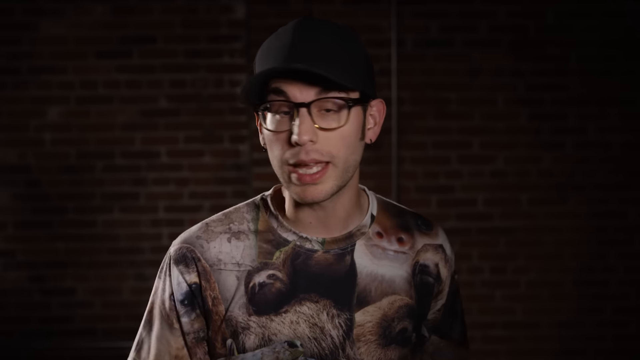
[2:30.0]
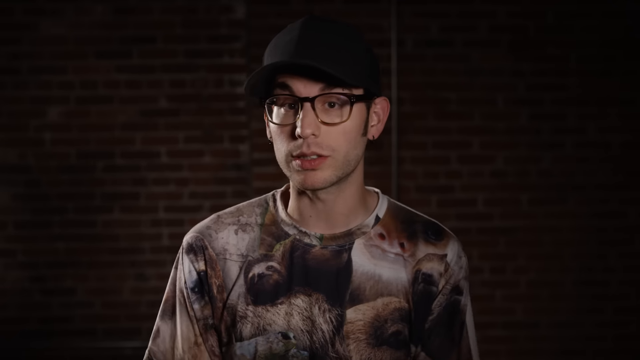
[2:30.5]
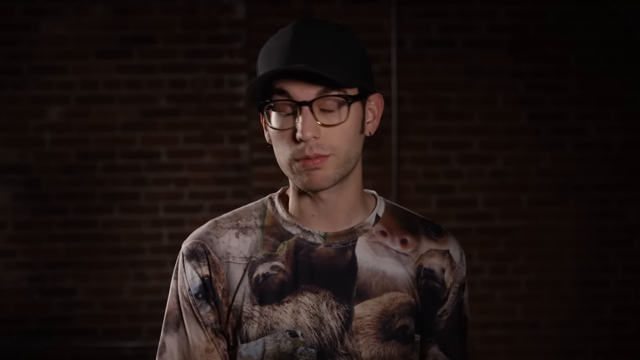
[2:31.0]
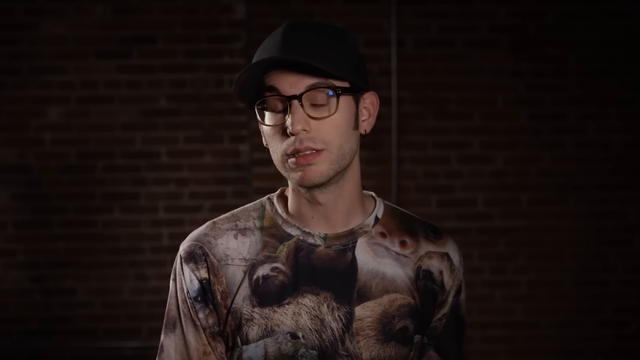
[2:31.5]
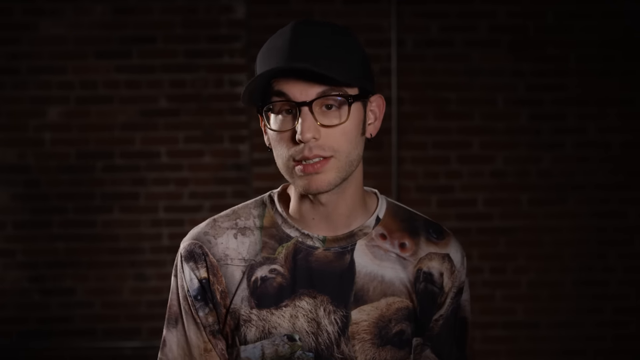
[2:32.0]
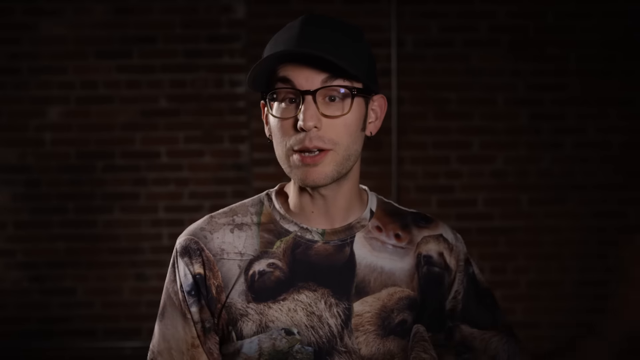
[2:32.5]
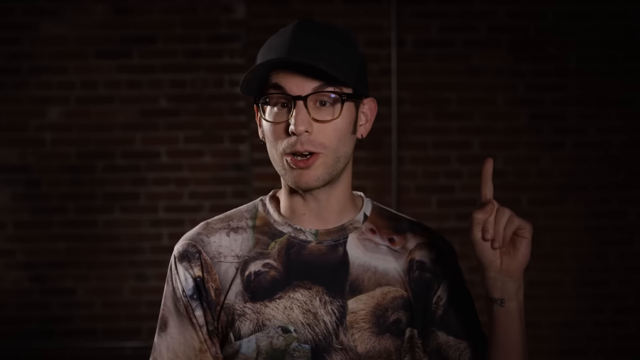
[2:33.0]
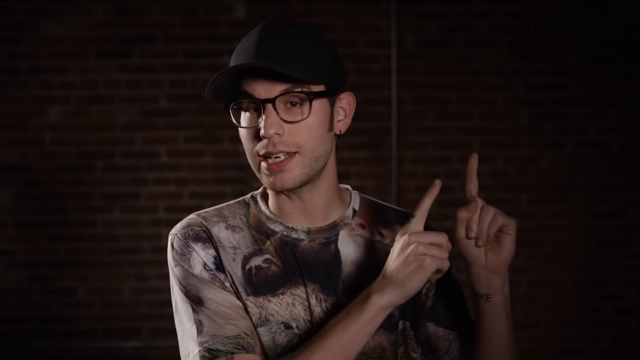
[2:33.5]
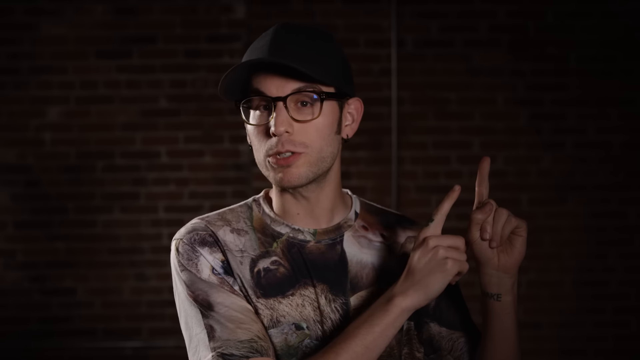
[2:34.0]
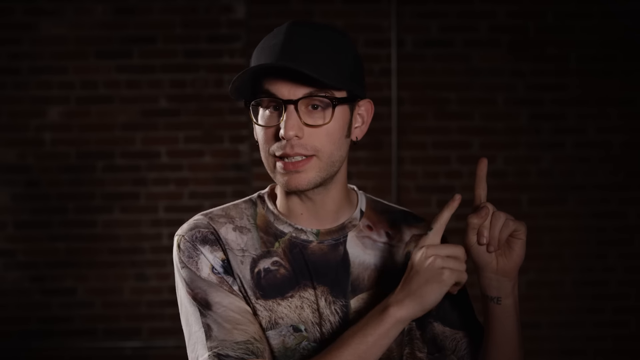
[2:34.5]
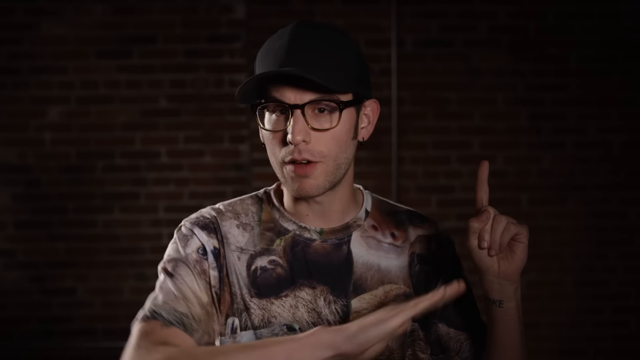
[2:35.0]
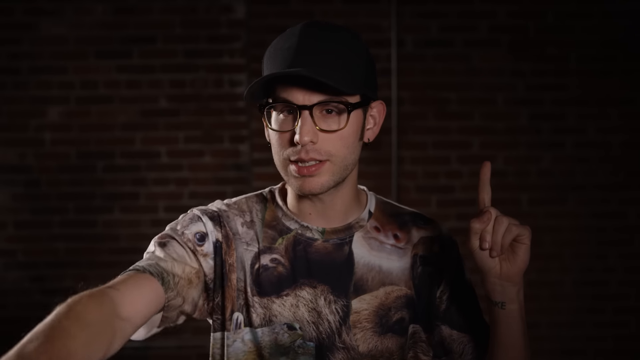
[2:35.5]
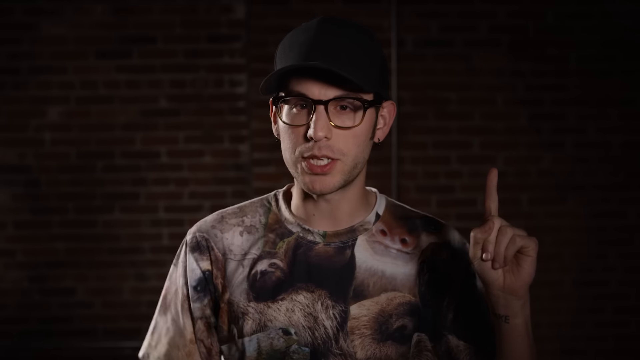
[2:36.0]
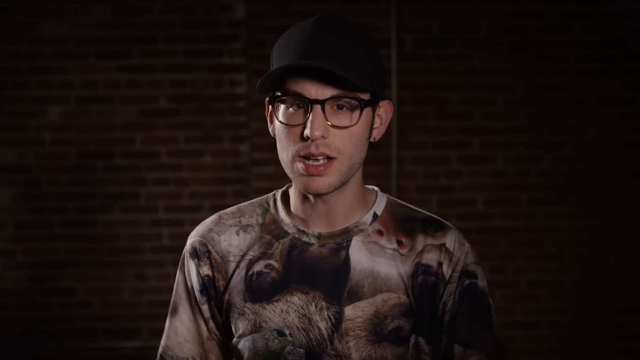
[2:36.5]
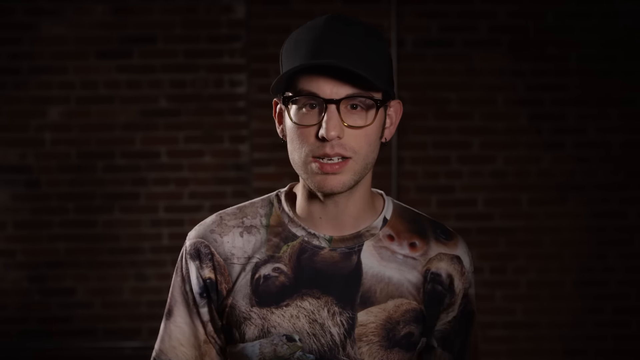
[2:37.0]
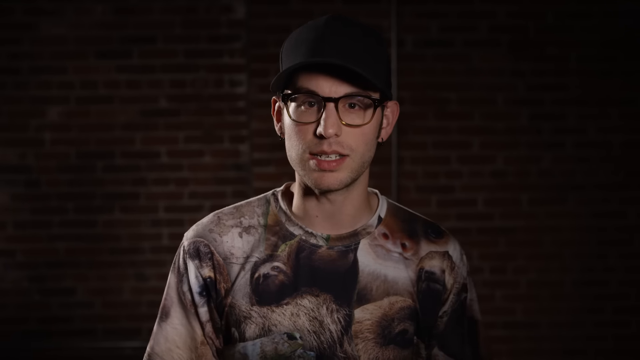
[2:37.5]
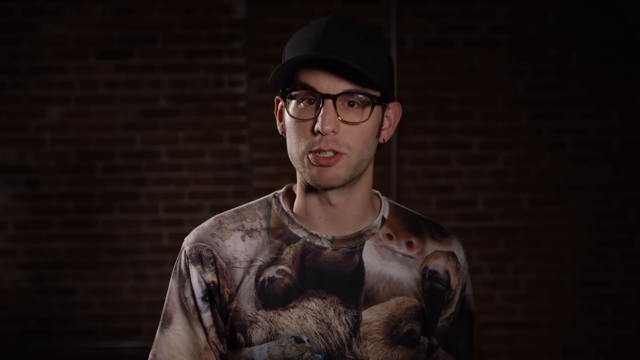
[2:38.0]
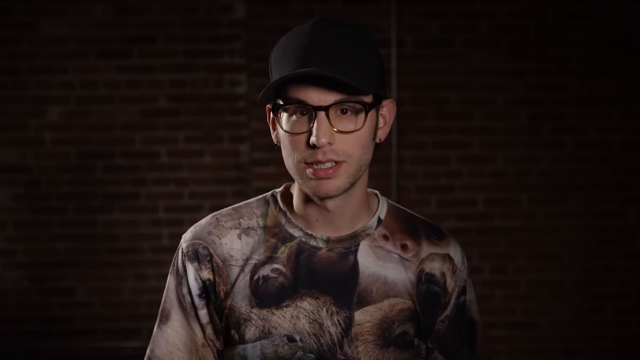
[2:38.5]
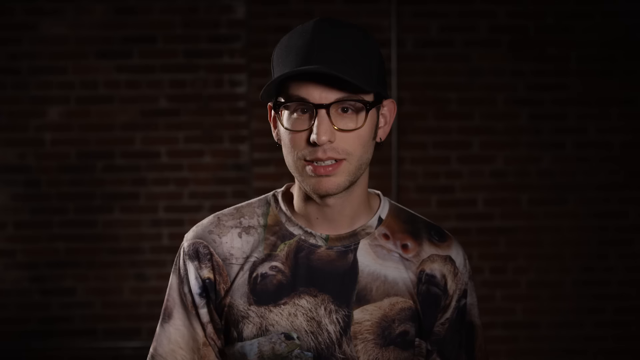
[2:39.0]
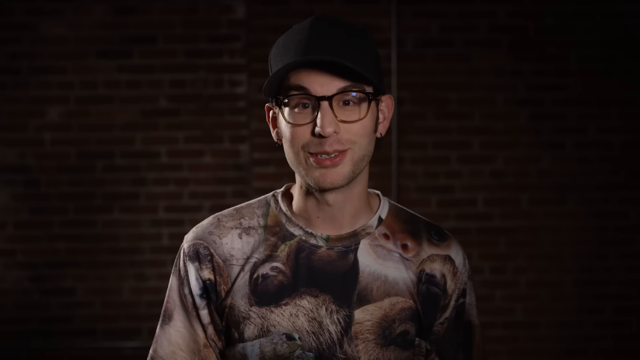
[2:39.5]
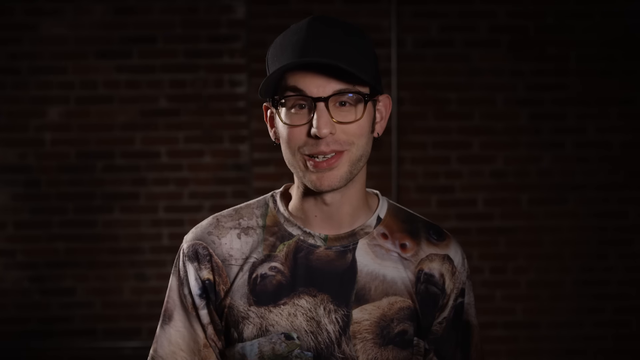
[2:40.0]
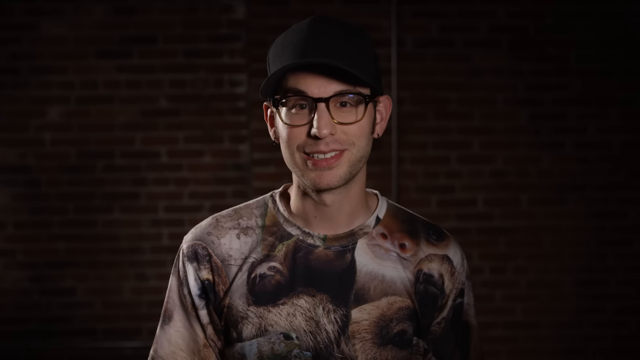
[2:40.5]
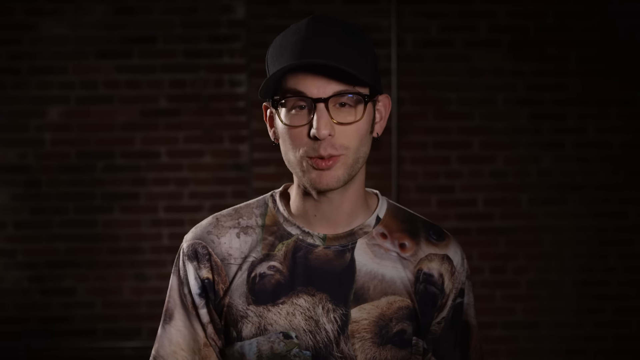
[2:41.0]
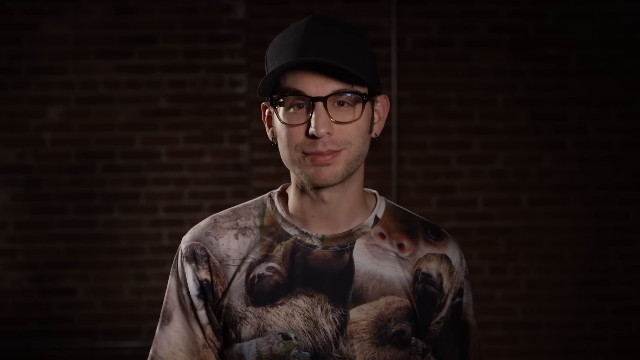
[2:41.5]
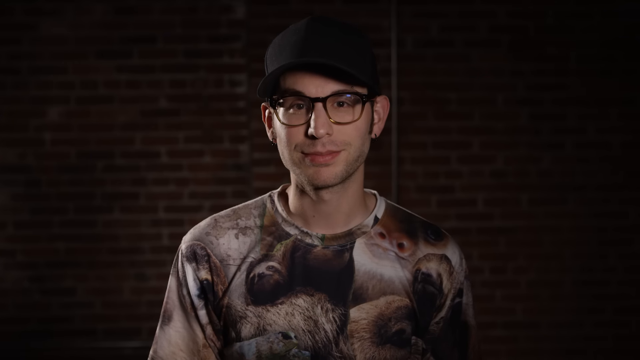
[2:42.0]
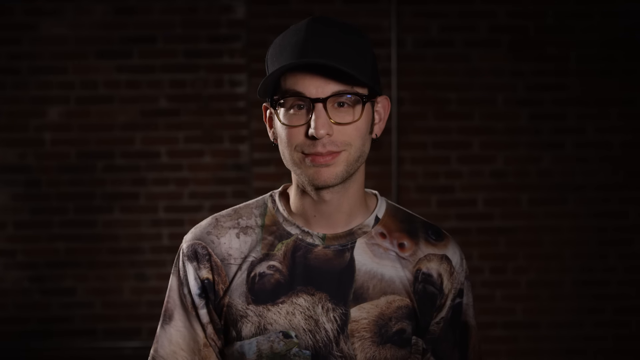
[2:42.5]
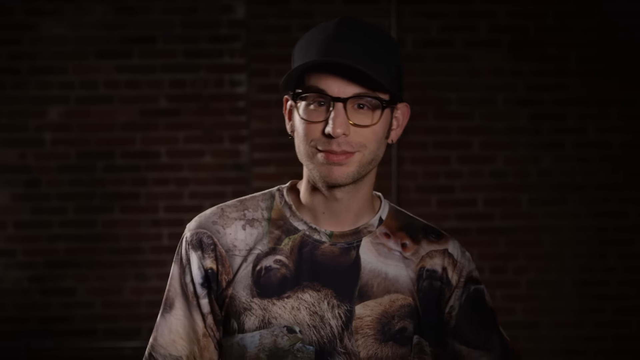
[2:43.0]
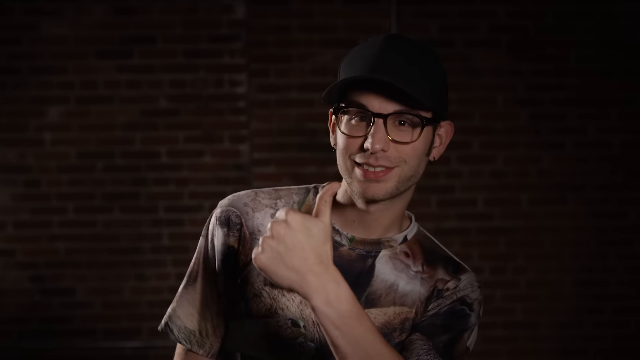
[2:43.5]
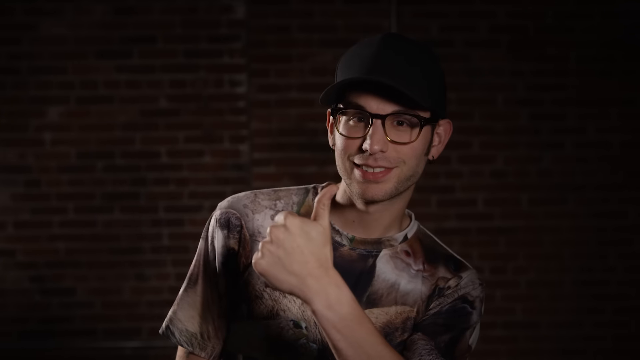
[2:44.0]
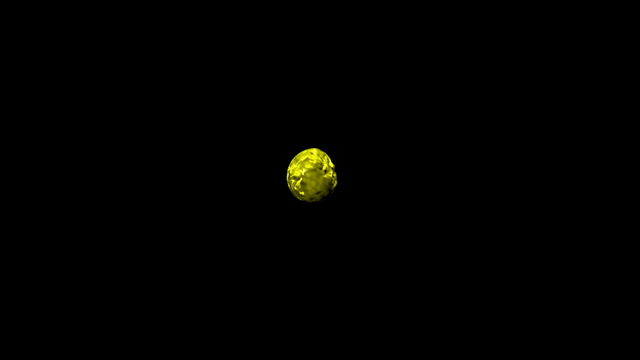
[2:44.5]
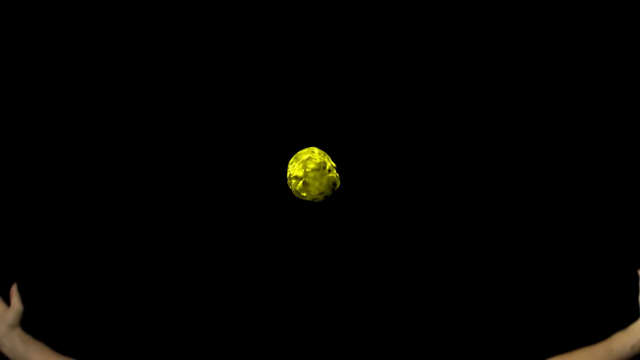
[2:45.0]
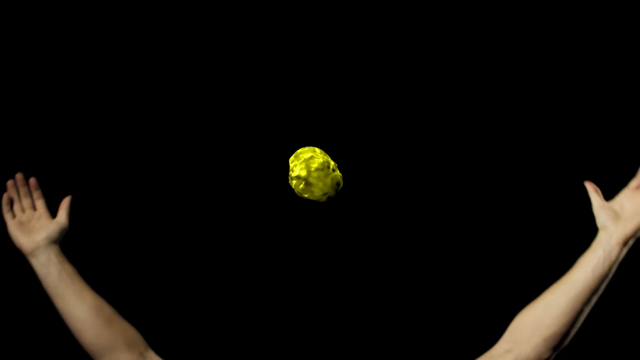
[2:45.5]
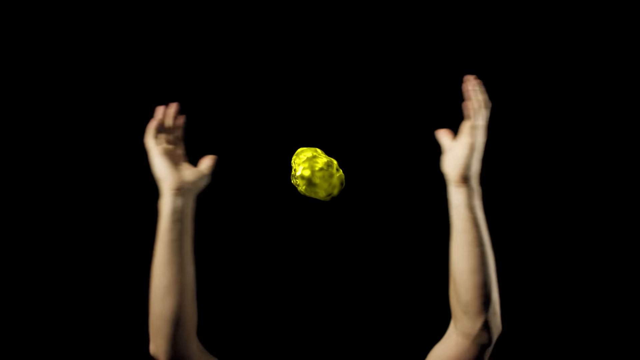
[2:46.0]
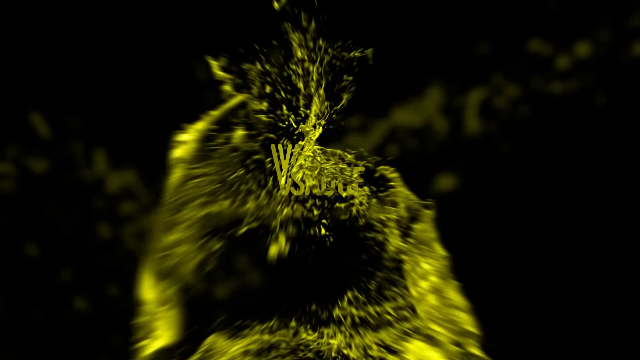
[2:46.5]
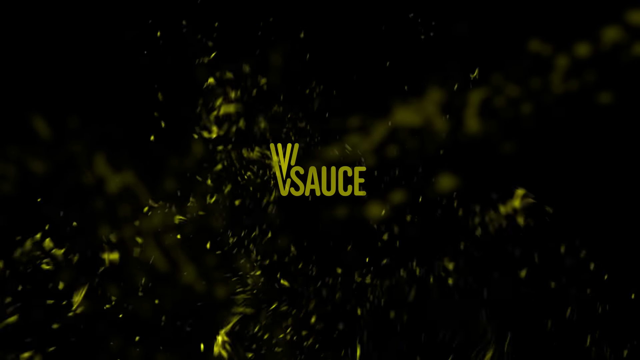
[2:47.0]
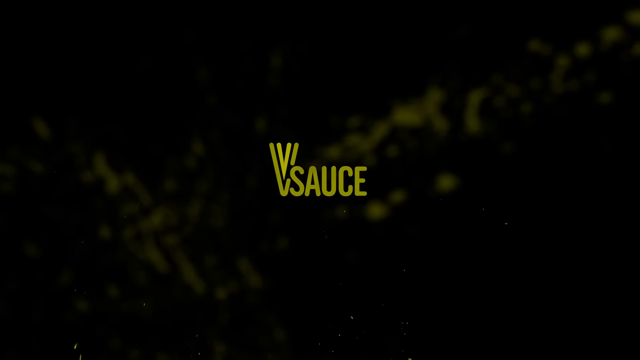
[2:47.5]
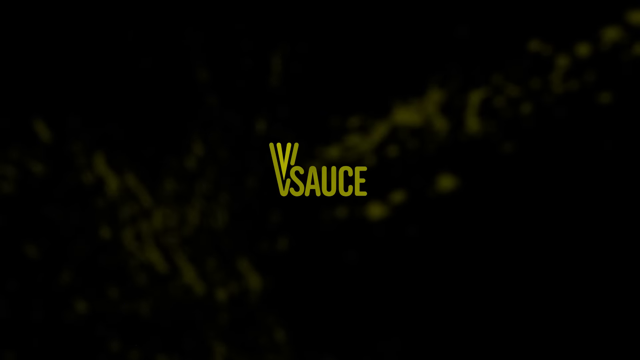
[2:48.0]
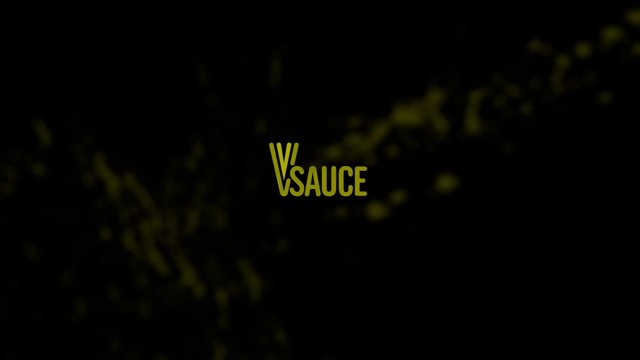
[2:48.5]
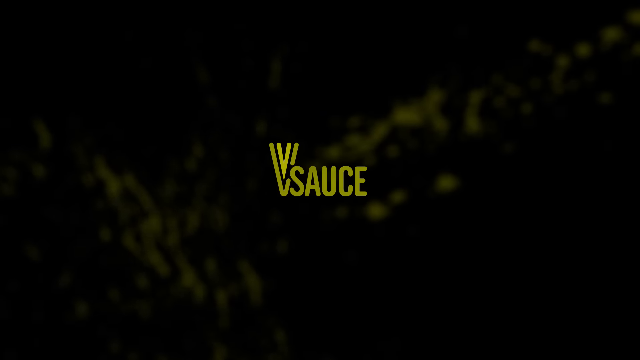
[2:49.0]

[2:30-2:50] A guy in black glasses and a black cap talks, wearing a shirt apparently covered in different sloths. He points up at the sky, then gives a thumbs up with his left hand and smiles, seeming happy. A colored brain appears with two hands, followed by a displayed Vsauce sign. Some of the clips from the beginning appear again: a rocket ship, Vsauce and Jake Man, followed by Game Loot. The collector's edition of Hyper Light Drifter is shown, available to pre-order on Steam, and he shows manuals with their contents.